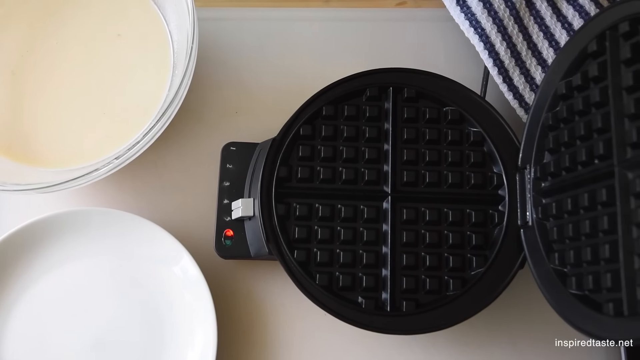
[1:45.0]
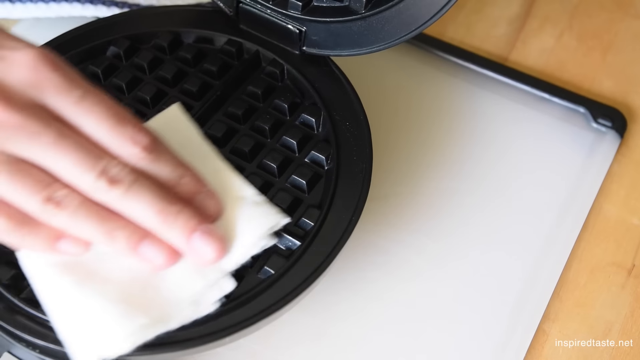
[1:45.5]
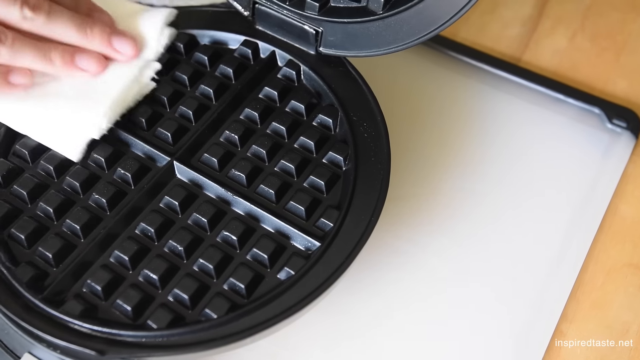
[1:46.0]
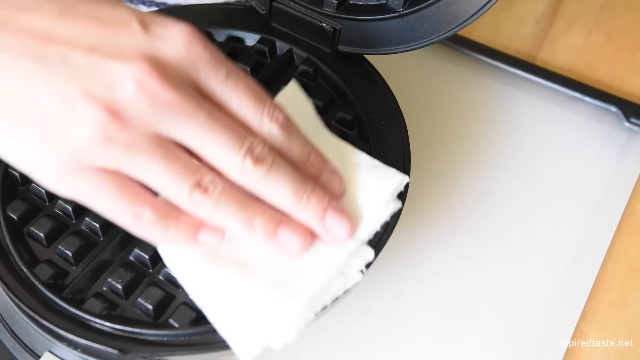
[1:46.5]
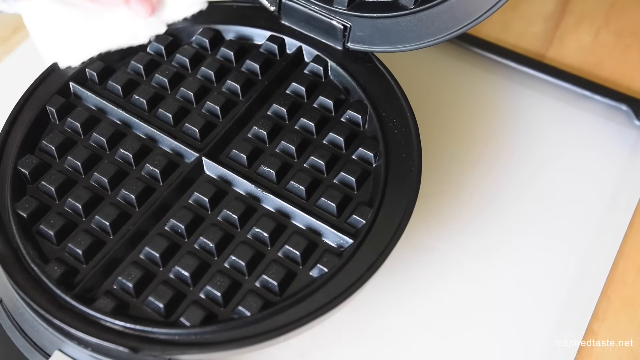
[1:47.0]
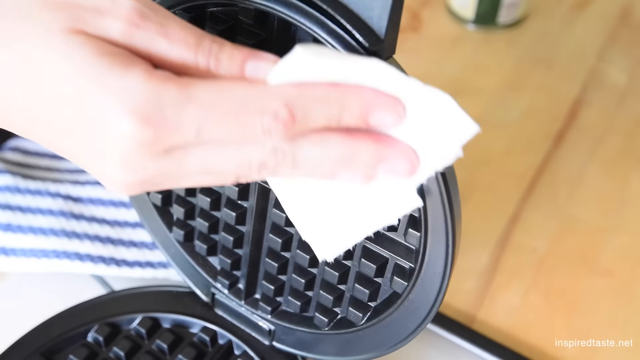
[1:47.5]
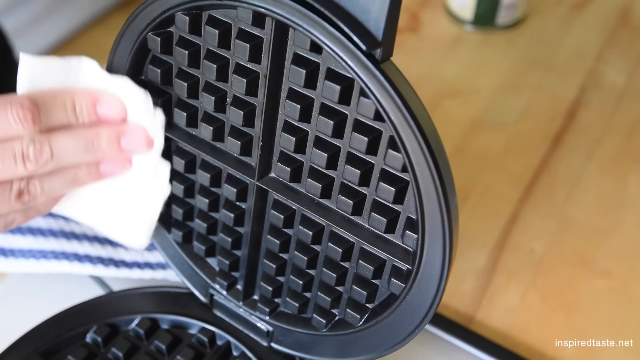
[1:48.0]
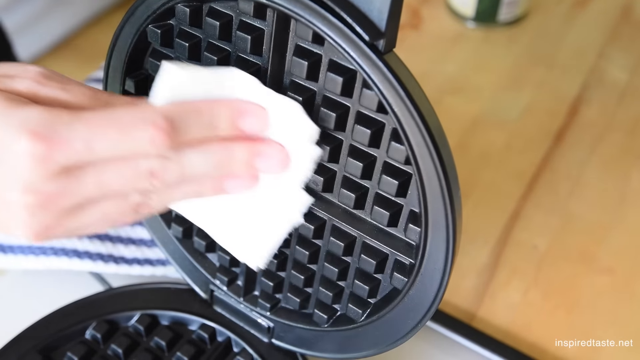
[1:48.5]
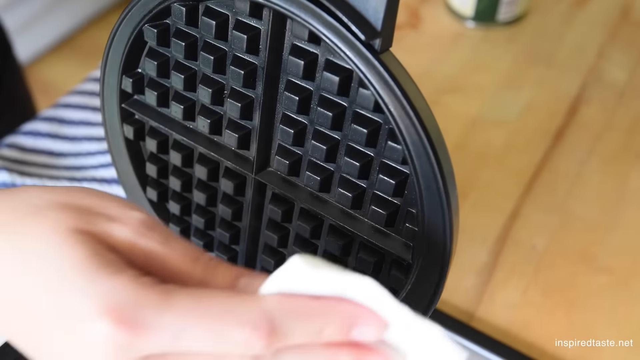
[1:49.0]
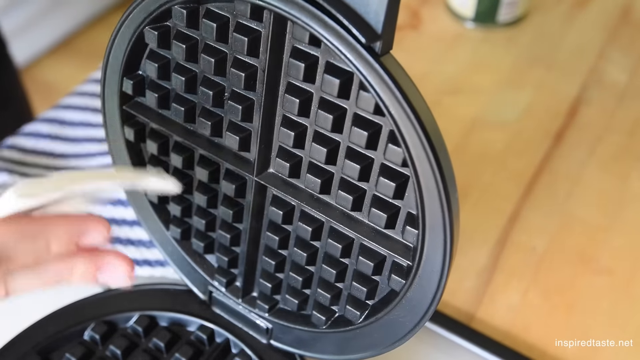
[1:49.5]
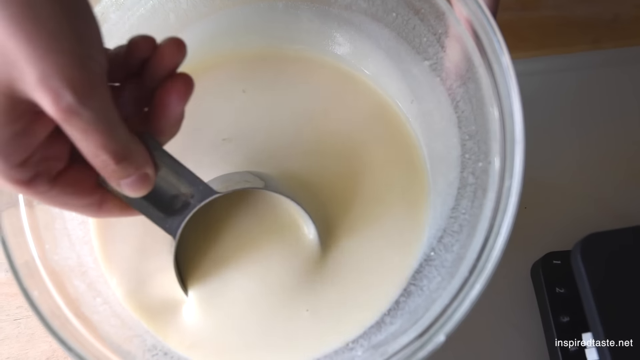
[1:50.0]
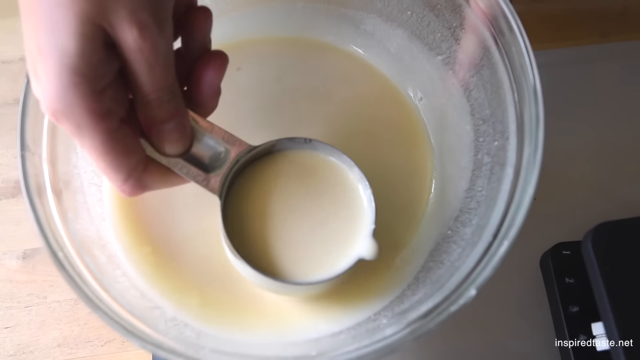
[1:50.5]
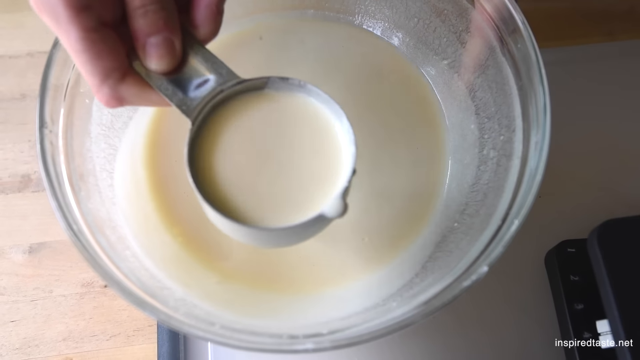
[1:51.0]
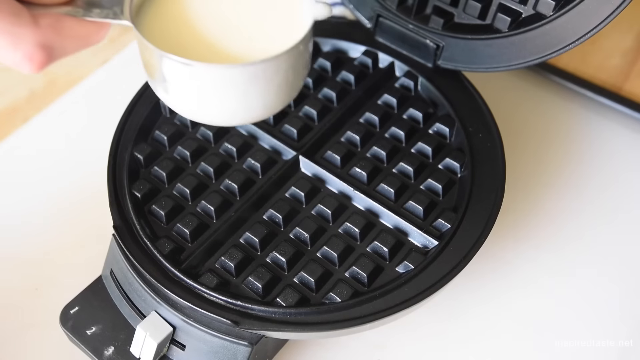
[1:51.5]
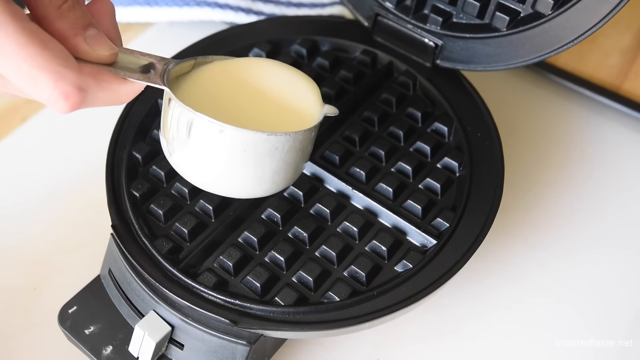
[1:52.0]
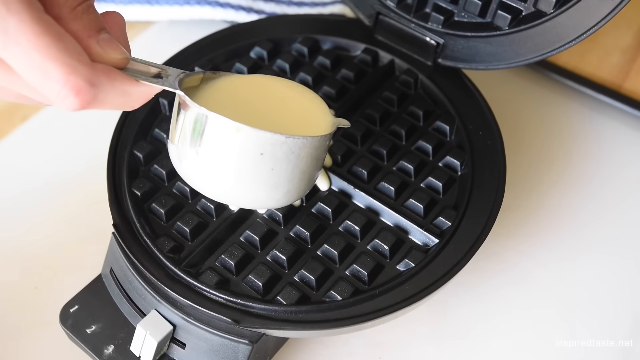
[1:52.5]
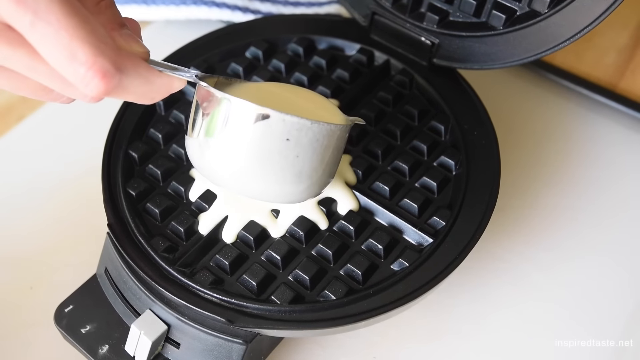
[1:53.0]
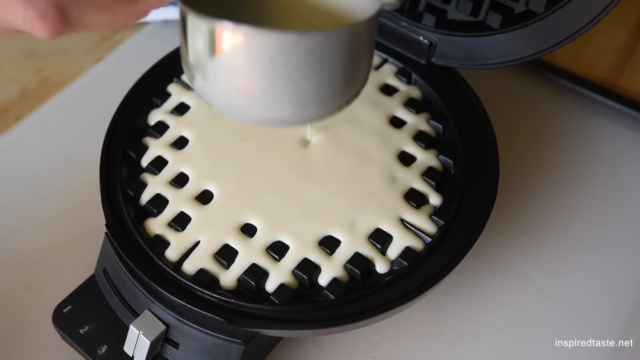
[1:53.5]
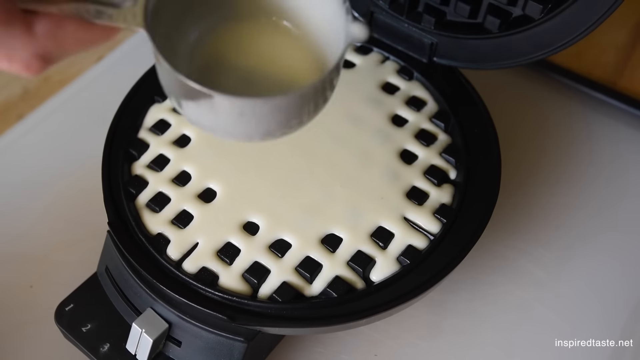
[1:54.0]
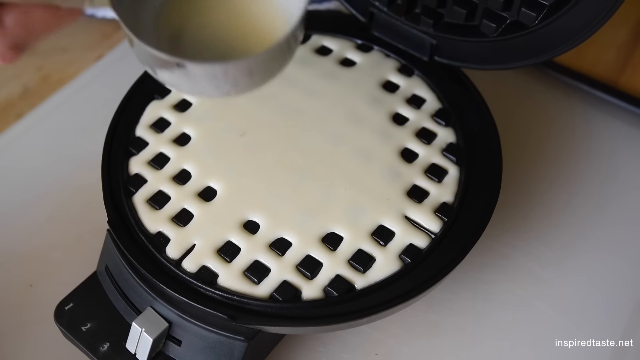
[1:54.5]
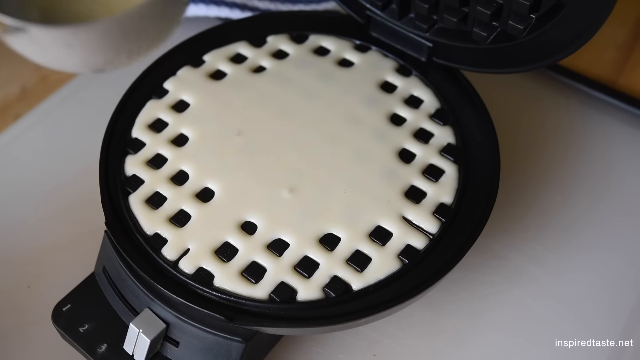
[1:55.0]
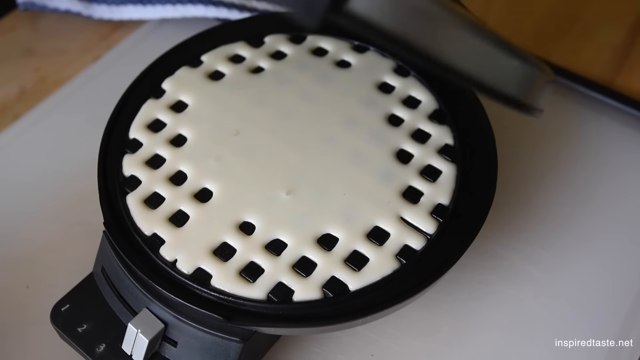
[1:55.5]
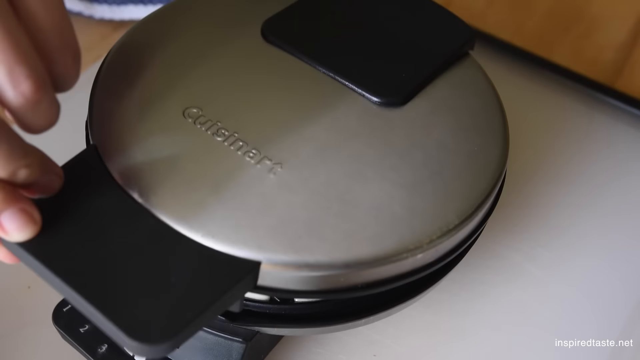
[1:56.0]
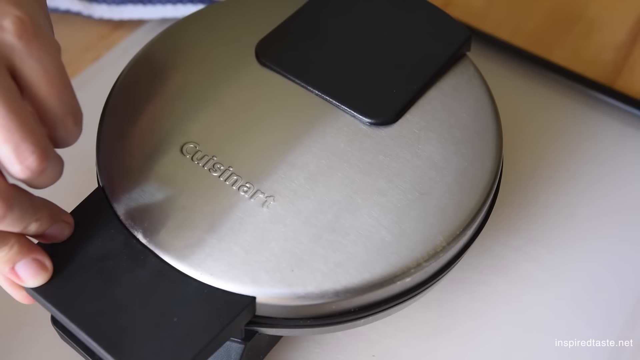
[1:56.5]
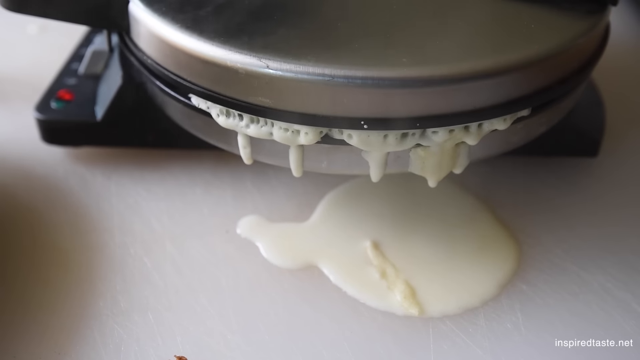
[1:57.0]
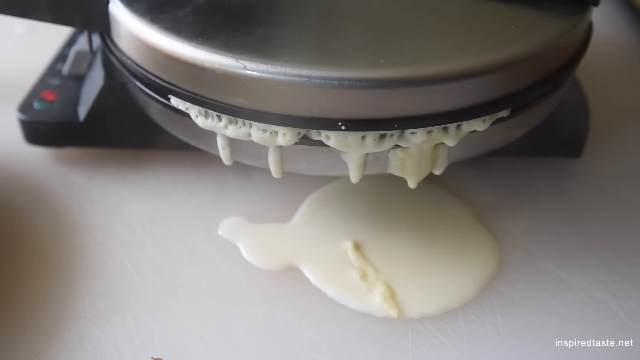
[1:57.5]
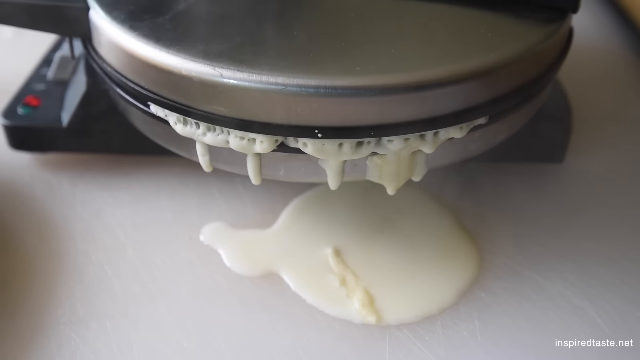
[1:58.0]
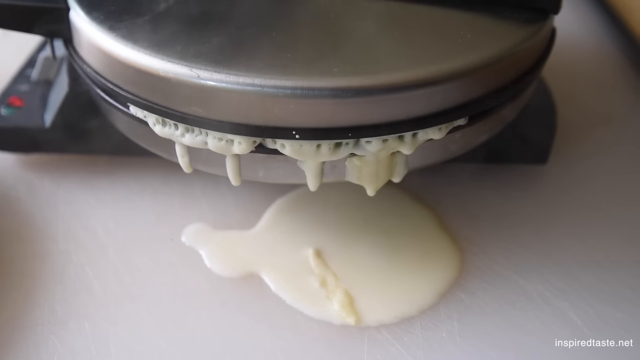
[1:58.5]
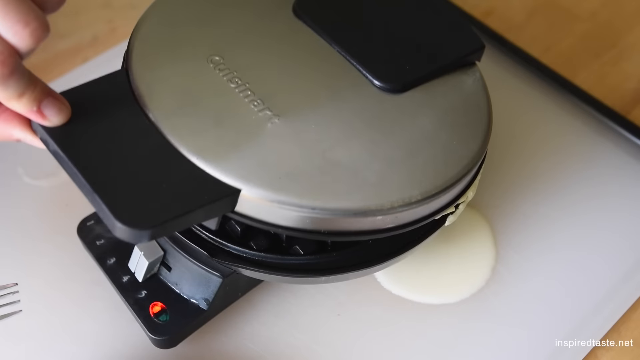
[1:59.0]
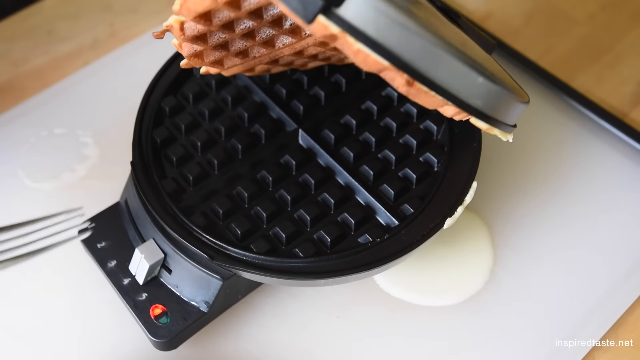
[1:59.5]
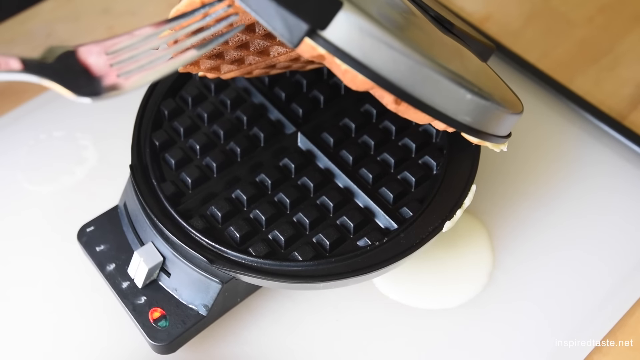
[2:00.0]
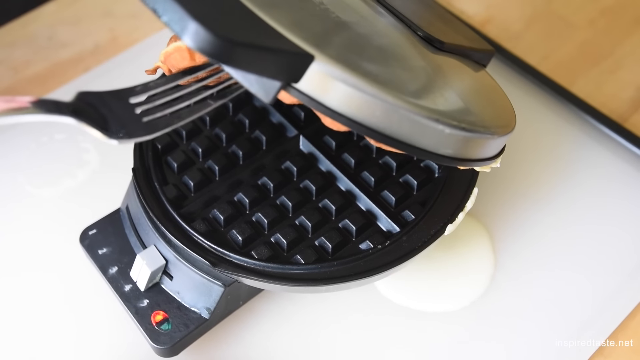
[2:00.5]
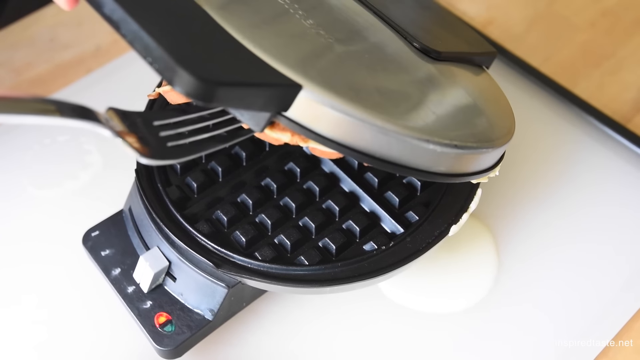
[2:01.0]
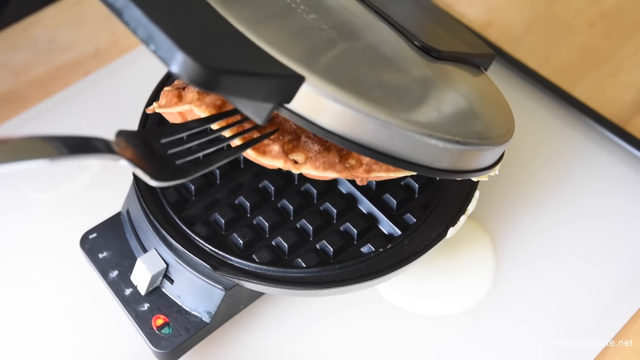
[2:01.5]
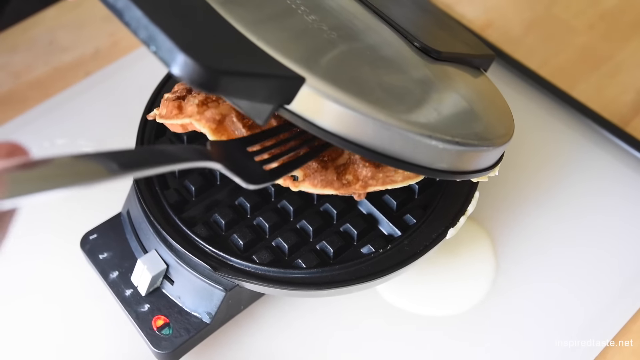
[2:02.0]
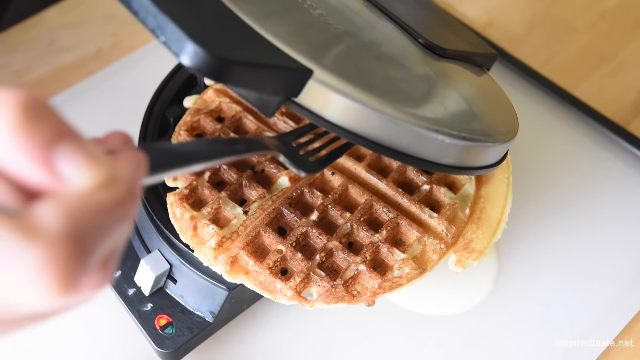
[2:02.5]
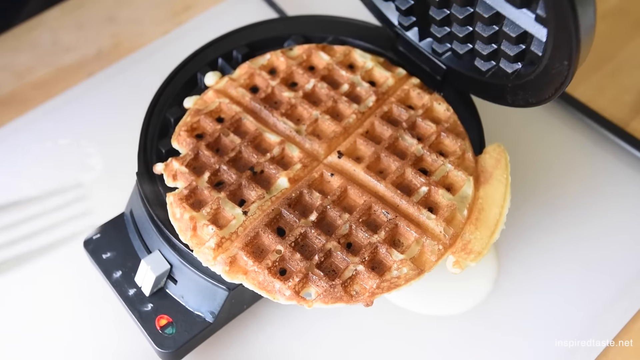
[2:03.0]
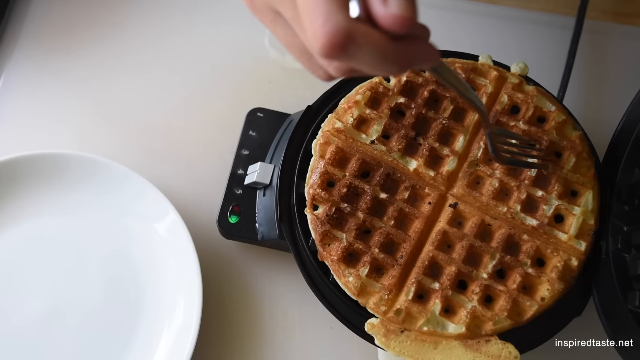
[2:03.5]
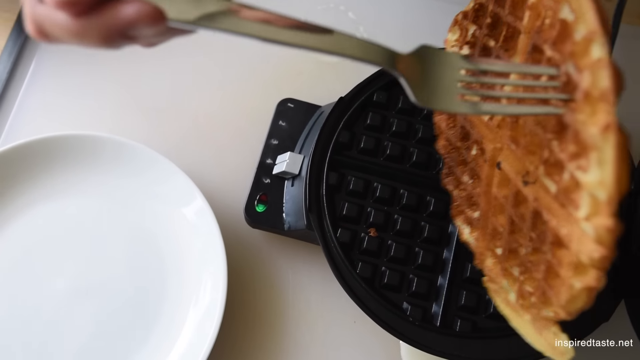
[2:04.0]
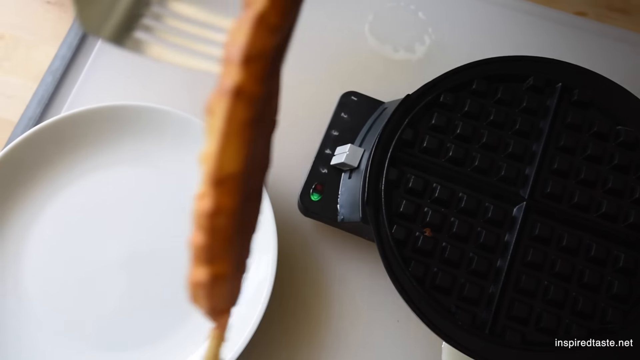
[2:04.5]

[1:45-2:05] The YouTube video is titled "easy crispy waffles recipe", with a play button in the middle, centered on top of a stack of four waffle pieces with syrup and butter on top and strawberries to the left on a white plate. After play is pressed, a person greases a waffle iron with a cloth, then scoops waffle batter out of the bowl with a measuring cup and pours it into the waffle iron. The batter looks very liquidy, and some of it runs out of the waffle iron onto the table, while the rest spreads out to fill the iron. When the waffle is done, the lid is lifted to show the cooked waffle inside, and she uses a fork to pull it off the top piece of the waffle iron. The waffle iron is silver and black and has various heating settings. The waffle is then put onto a plate.